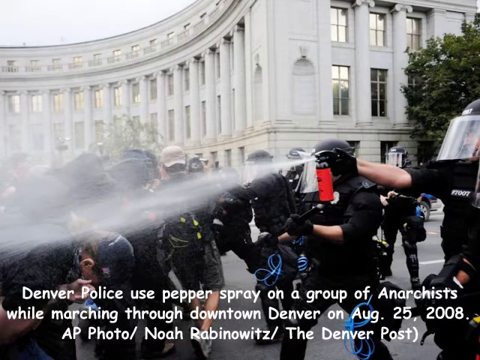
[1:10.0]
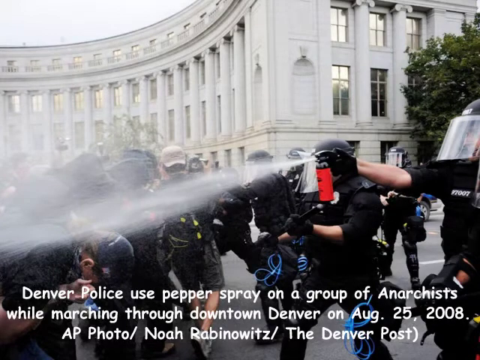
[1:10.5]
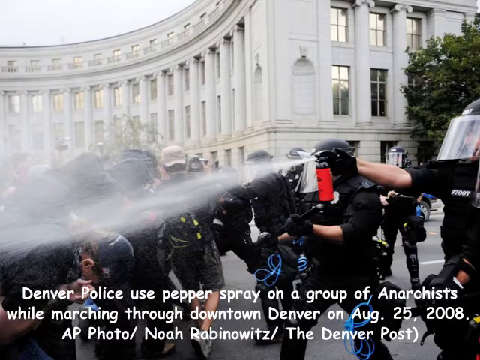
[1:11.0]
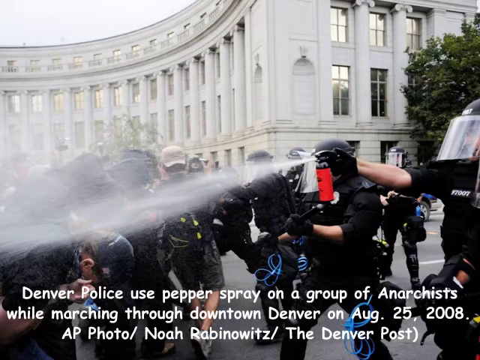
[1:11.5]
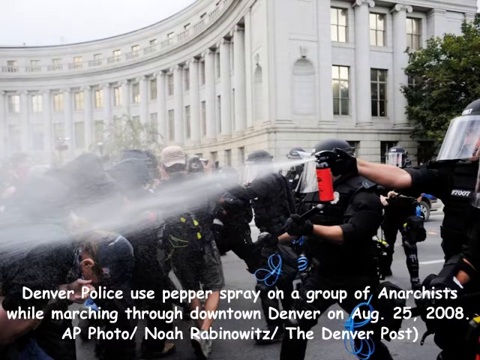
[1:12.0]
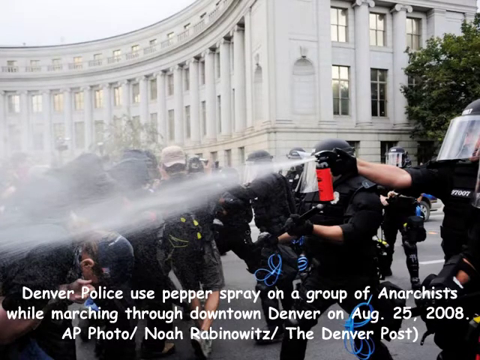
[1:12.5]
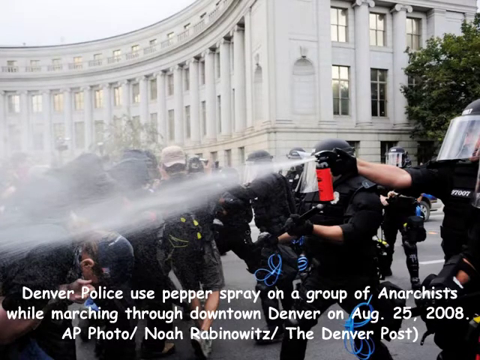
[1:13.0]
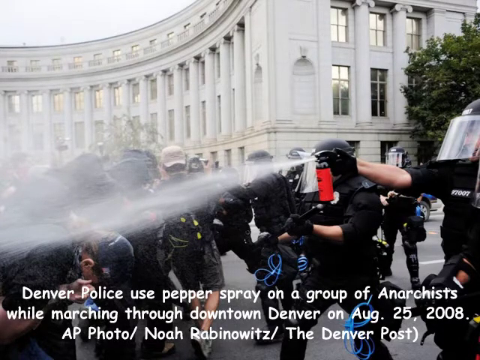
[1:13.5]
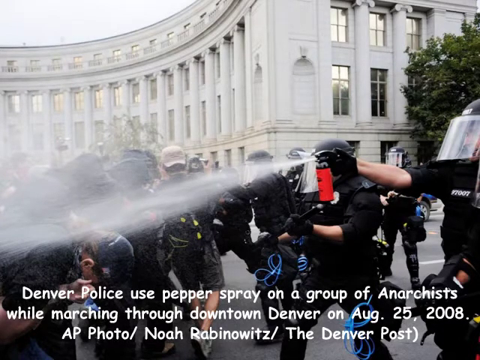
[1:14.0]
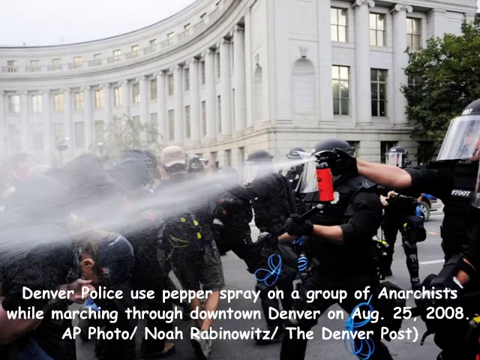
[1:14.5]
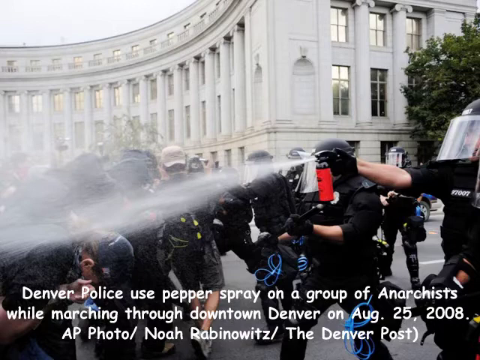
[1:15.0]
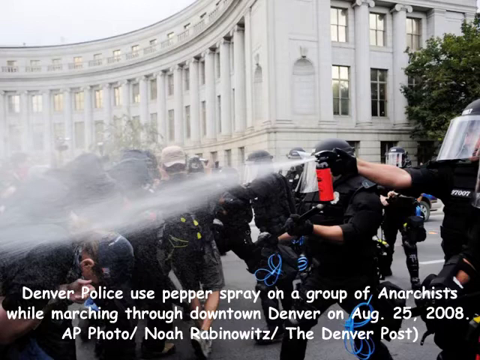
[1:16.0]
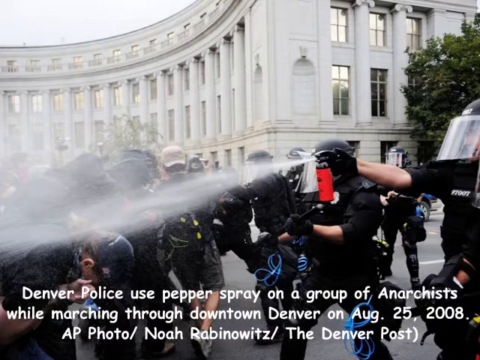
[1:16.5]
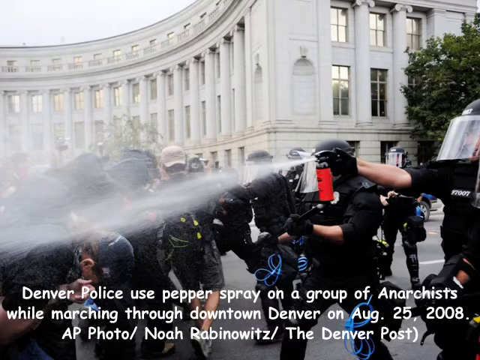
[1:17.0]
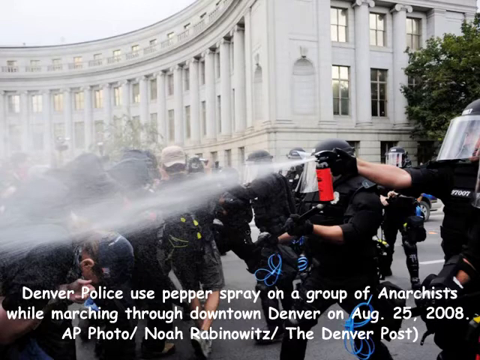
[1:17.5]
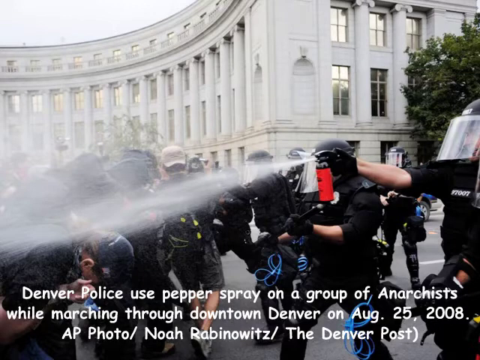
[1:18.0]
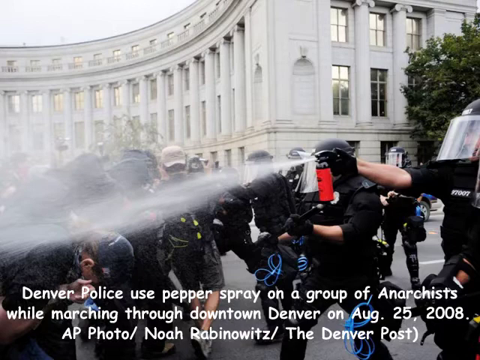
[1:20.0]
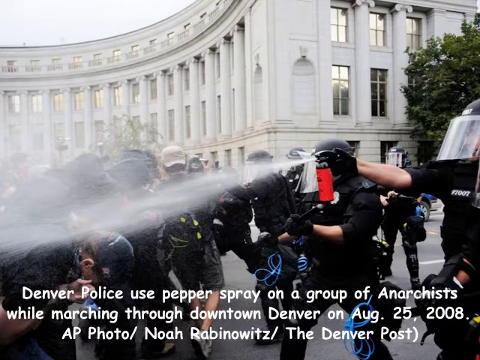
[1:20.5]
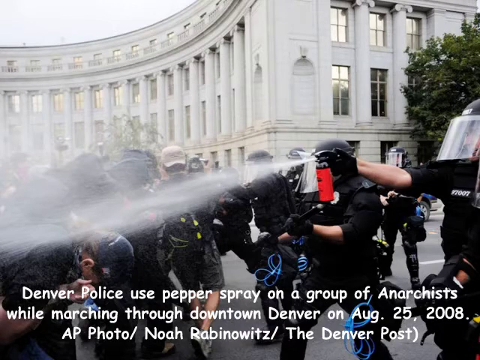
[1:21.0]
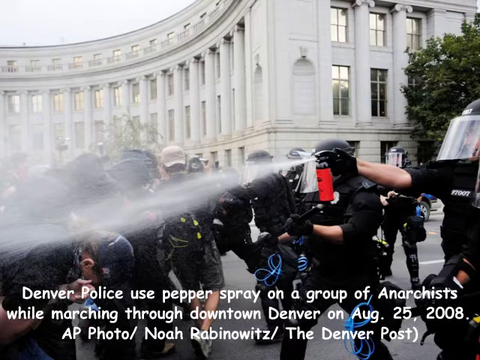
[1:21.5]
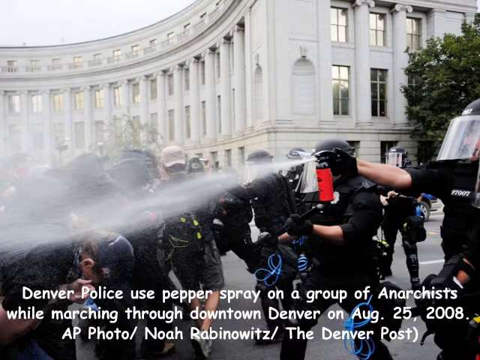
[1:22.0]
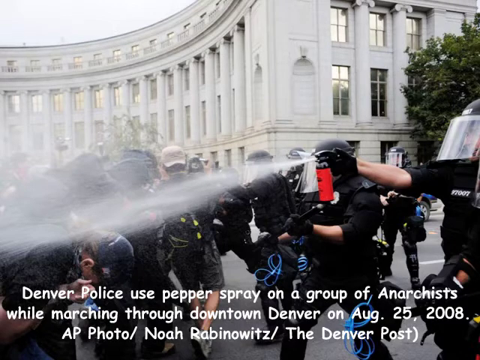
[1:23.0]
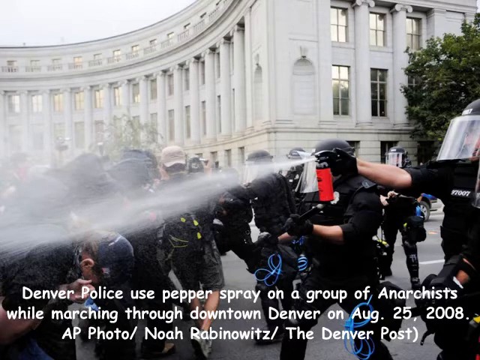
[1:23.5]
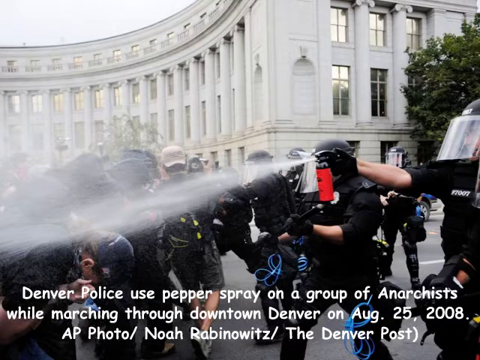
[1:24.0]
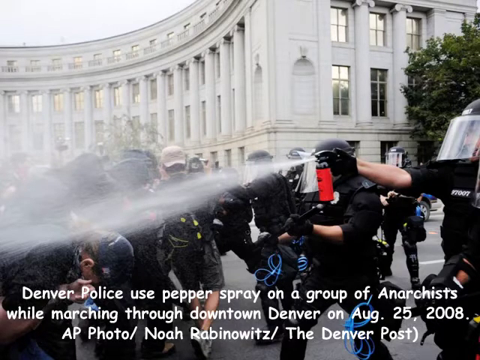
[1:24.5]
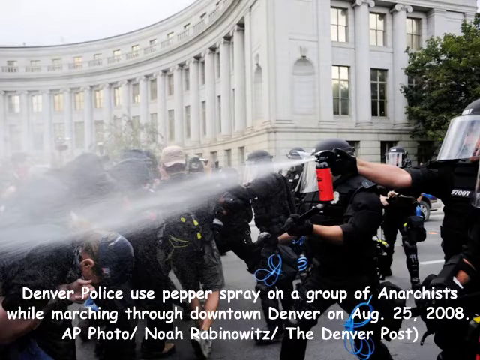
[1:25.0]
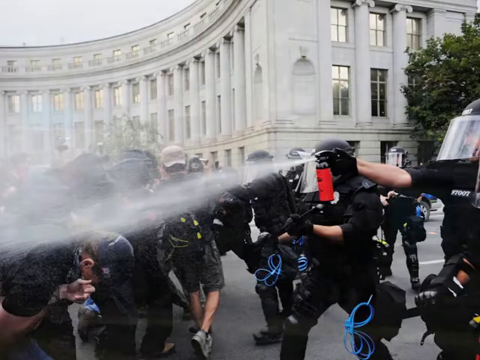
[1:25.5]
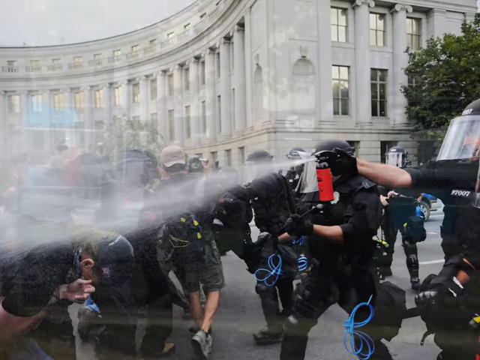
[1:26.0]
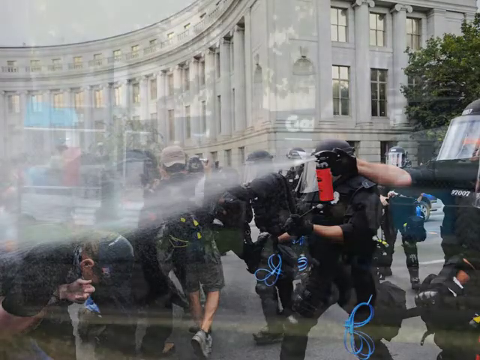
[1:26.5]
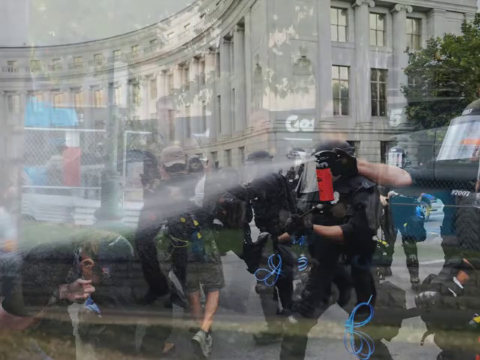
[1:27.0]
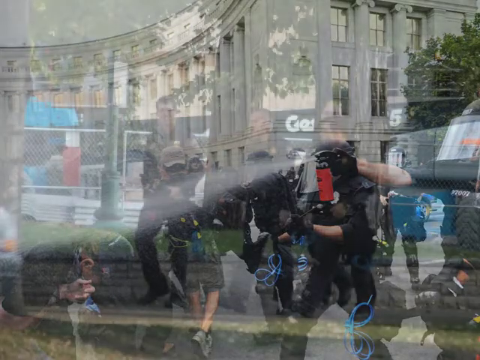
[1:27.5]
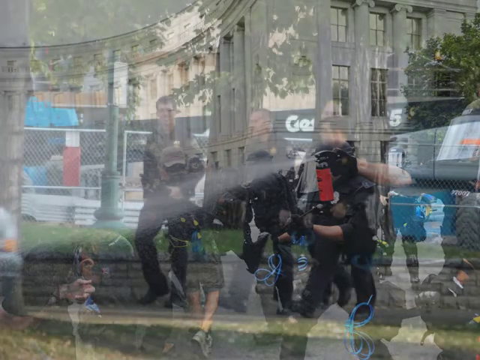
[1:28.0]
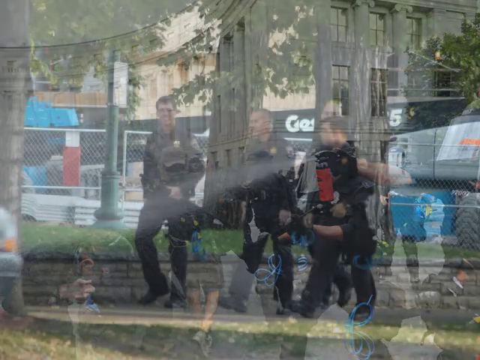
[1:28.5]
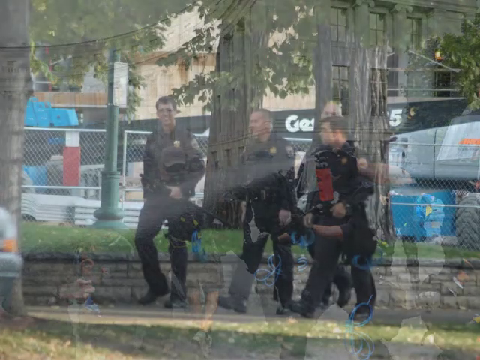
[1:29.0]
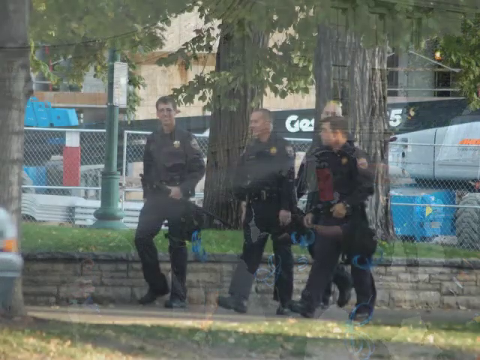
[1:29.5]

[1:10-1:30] Still shots continue showing Denver police using pepper spray on a group of anarchists. The text states they are walking through downtown Denver, and they are shown in front of a very large, semi-circular building of Roman architecture, possibly a government building, with many windows around the front and side. The officers wear riot gear and appear to hold long, streaming spray cans of pepper spray. Next, four officers appear to be walking along a non-congested walkway or sidewalk. They appear very friendly and smiling, not seeming hostile or aggressive toward the surroundings or anyone nearby, and they all appear well equipped with protective gear.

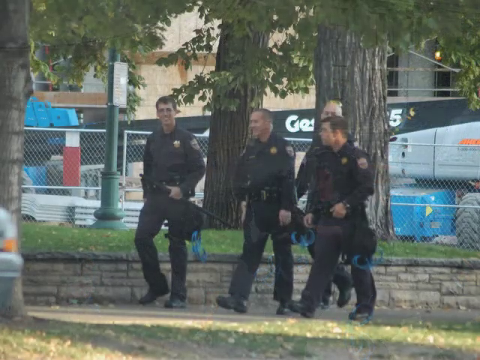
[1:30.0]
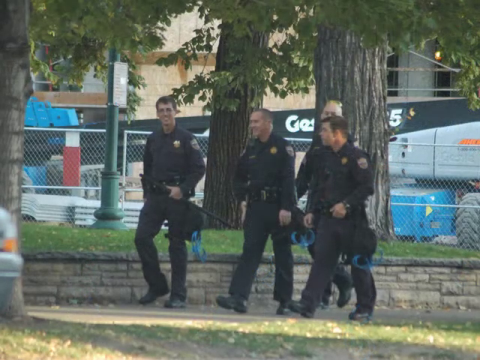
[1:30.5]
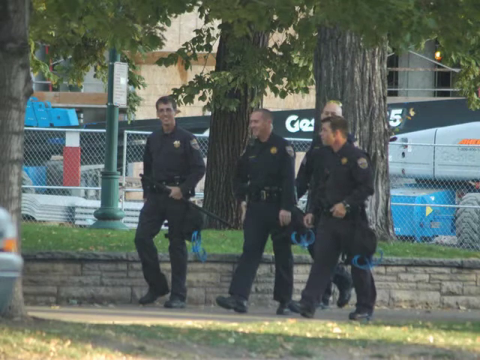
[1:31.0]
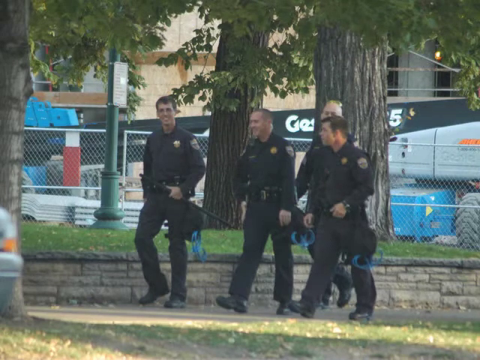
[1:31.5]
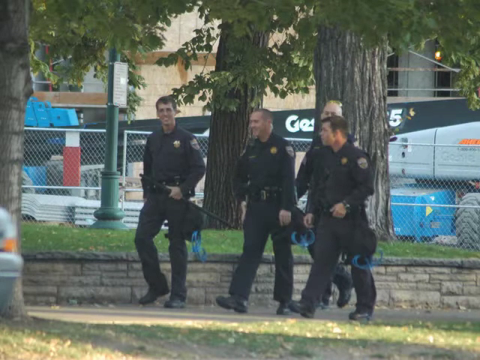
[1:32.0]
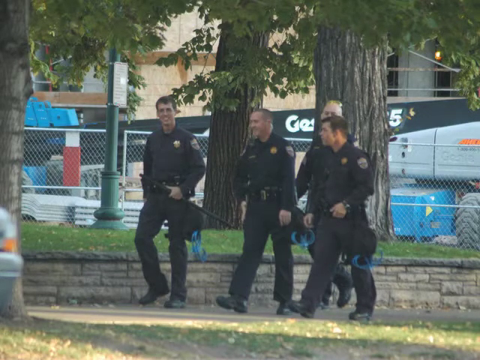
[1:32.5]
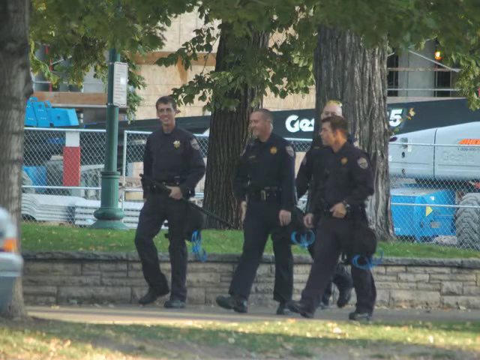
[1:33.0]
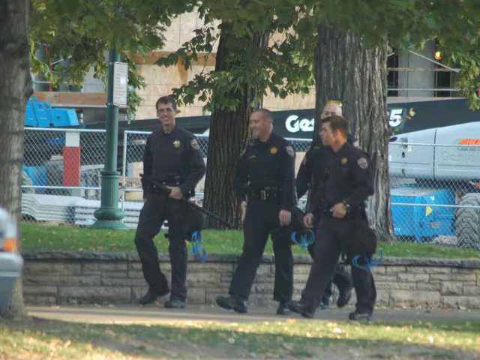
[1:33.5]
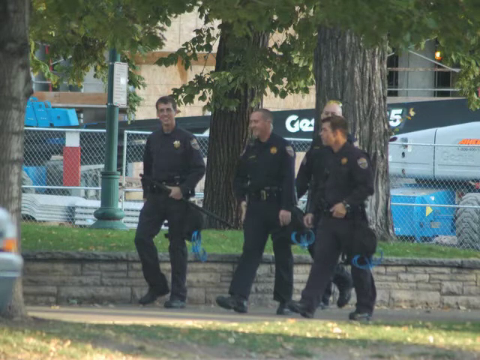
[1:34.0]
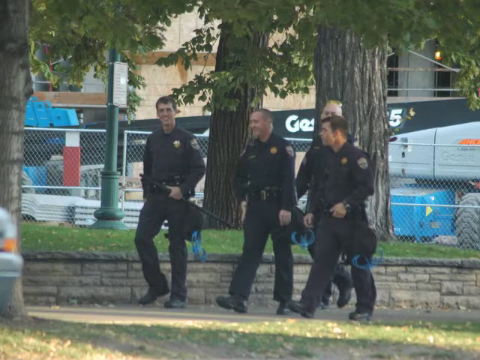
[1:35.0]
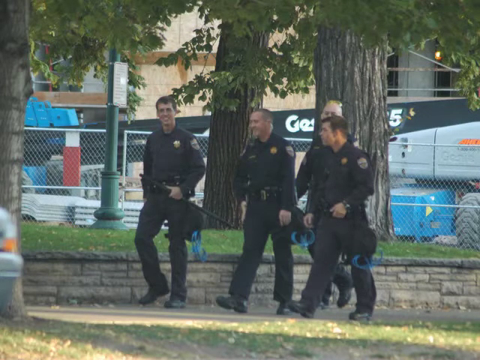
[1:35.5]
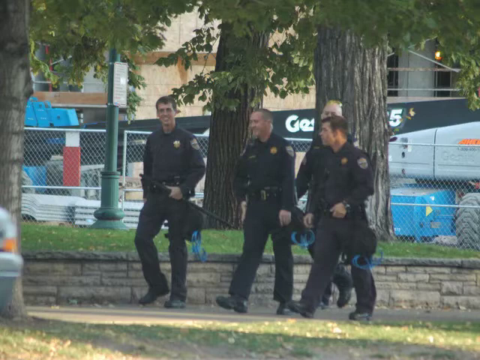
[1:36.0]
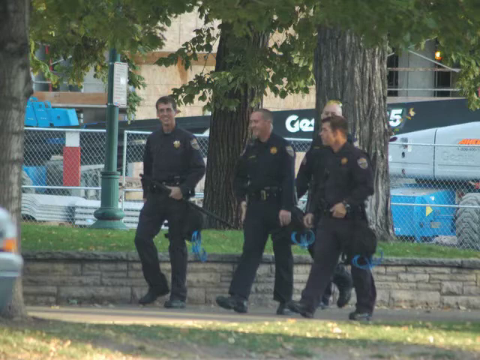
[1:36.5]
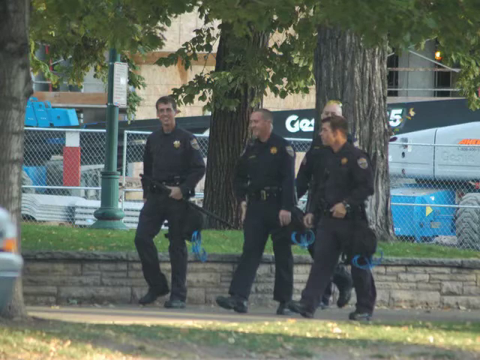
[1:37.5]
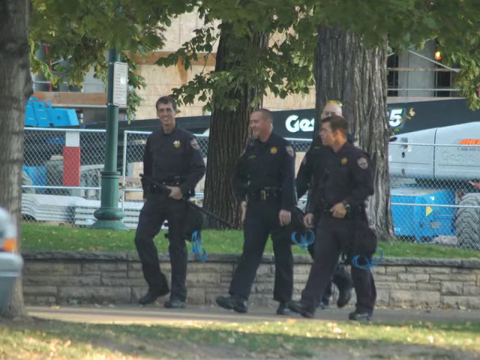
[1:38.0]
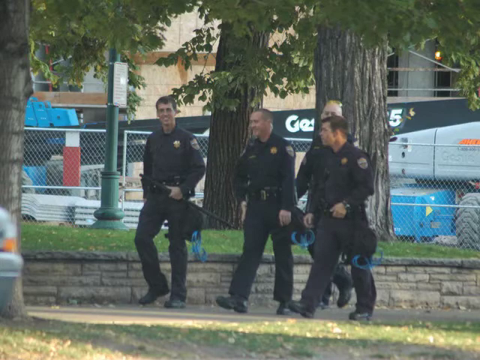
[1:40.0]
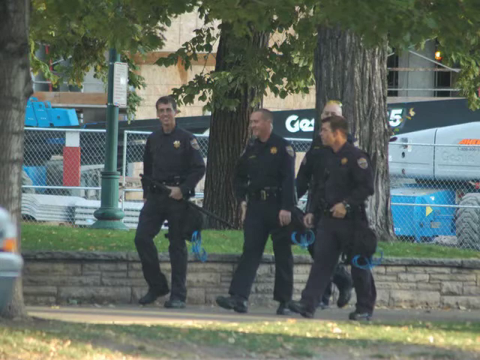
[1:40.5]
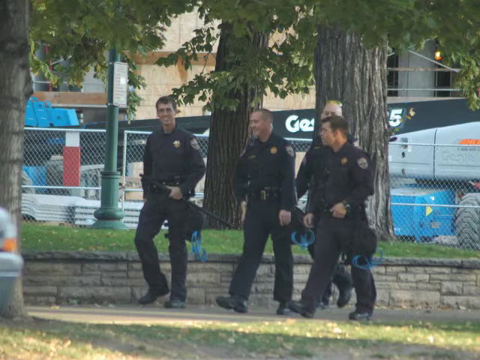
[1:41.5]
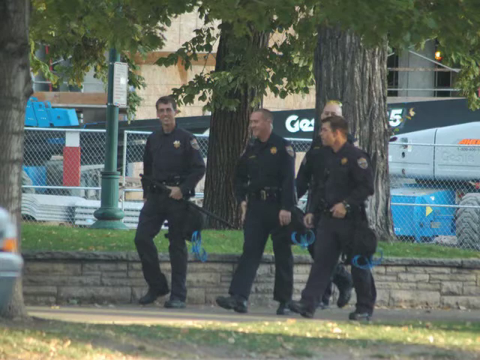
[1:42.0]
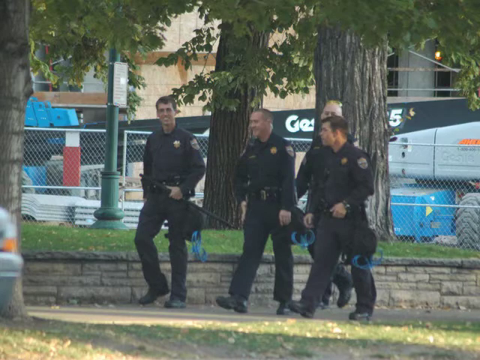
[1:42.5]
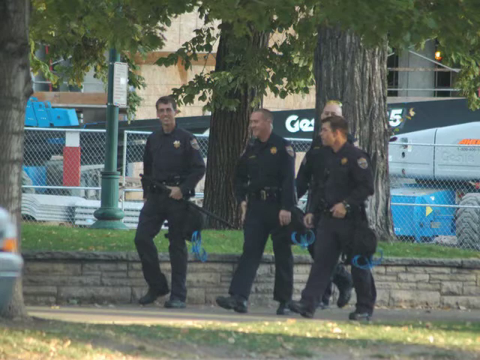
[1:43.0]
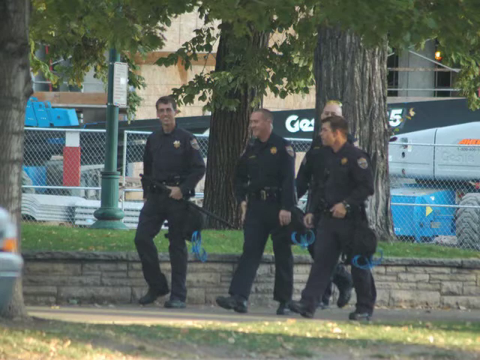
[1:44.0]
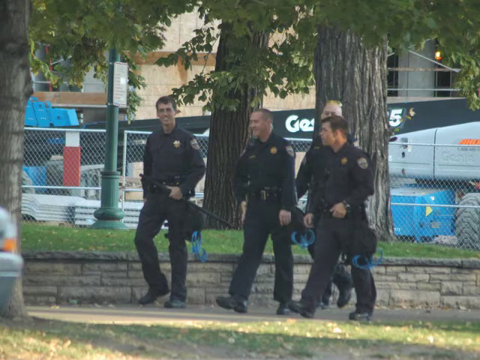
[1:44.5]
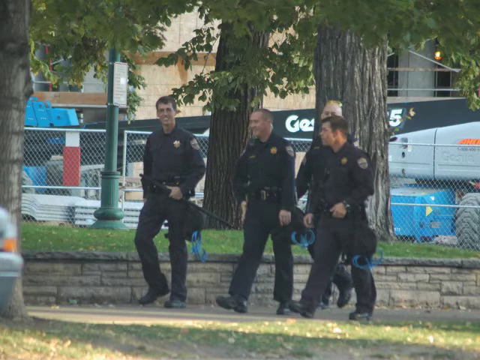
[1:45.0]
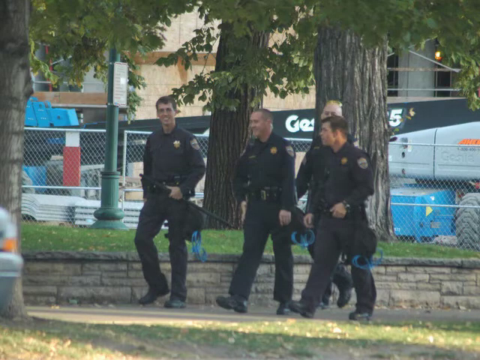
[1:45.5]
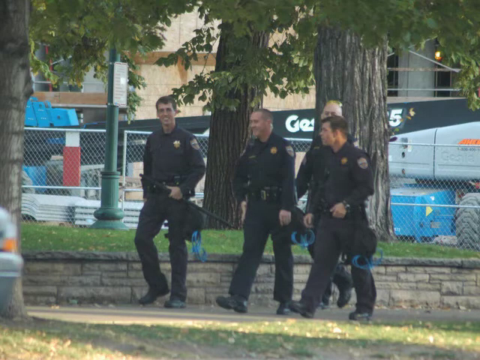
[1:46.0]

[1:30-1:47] The same still shot shows four officers walking along a sidewalk. In the background there appears to be construction, with a large crane visible and a fence separating the equipment from a small grassy area. There are three very large trees that appear very healthy. The sidewalk is very well kept, with an approximately two-foot wall separating it from the grassy area. The four officers appear to be talking, laughing and jovial as they move upward along the sidewalk. No other people are noticeable; the only other object is the back of a car that appears to be parked at the side of the road.